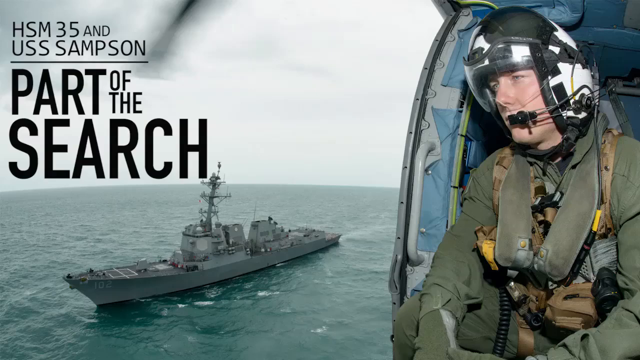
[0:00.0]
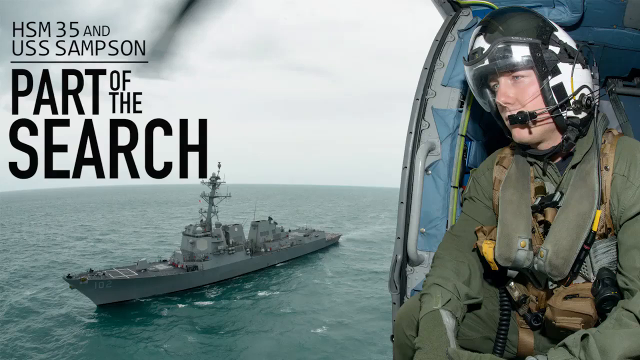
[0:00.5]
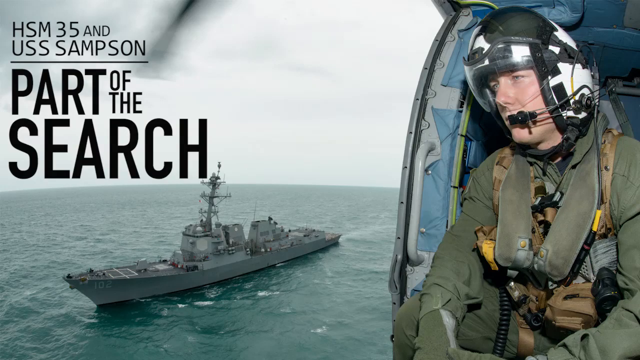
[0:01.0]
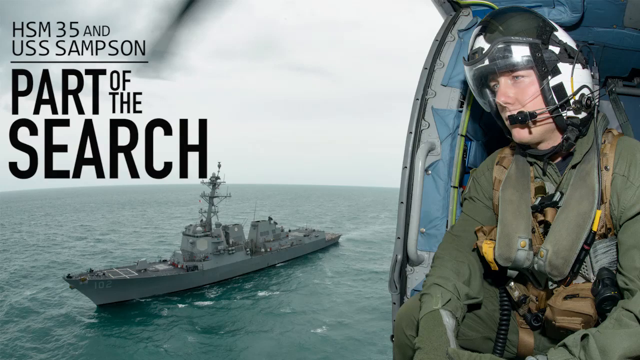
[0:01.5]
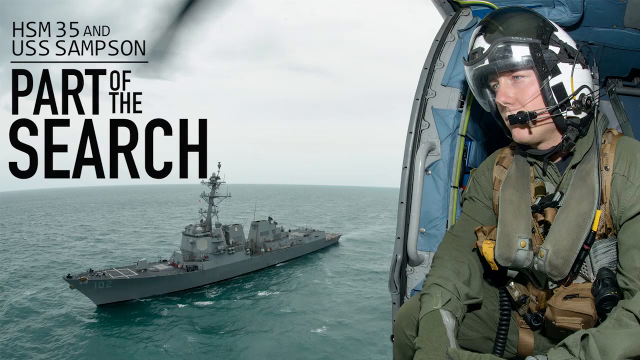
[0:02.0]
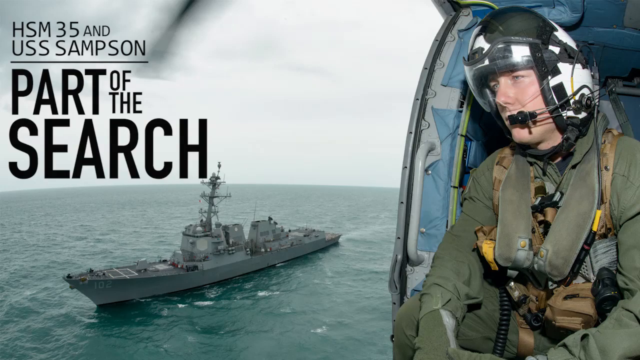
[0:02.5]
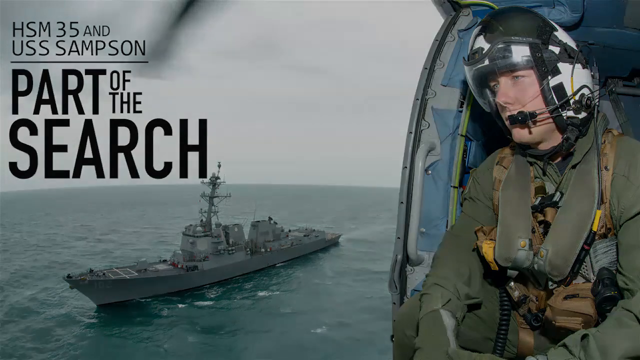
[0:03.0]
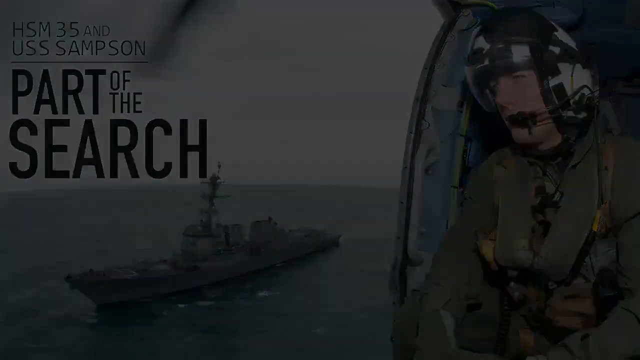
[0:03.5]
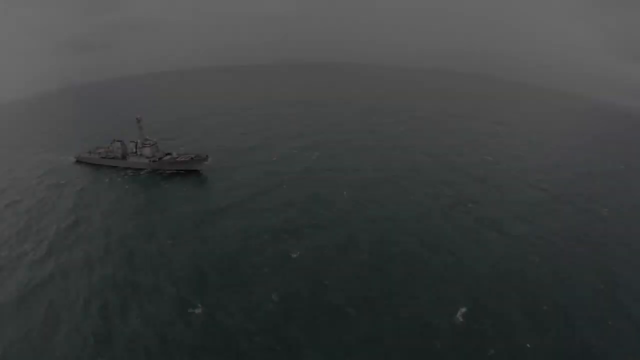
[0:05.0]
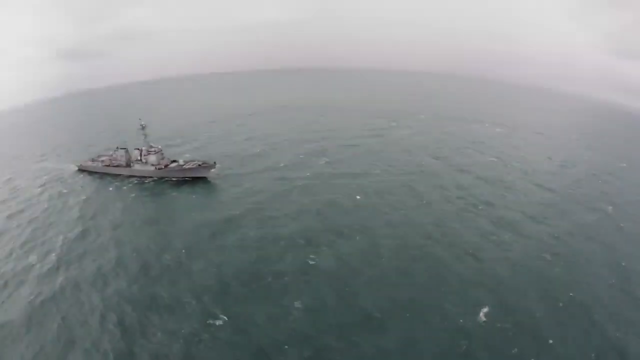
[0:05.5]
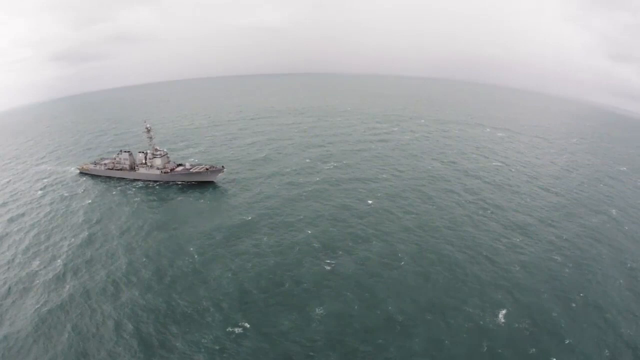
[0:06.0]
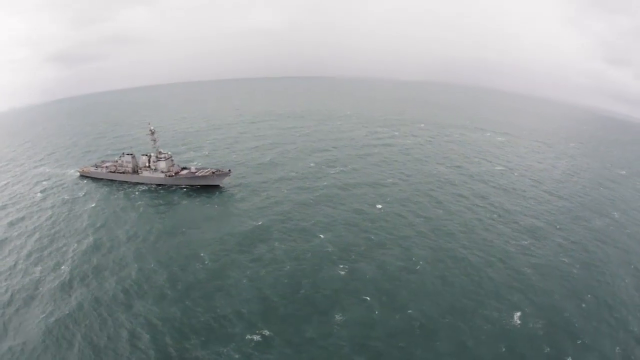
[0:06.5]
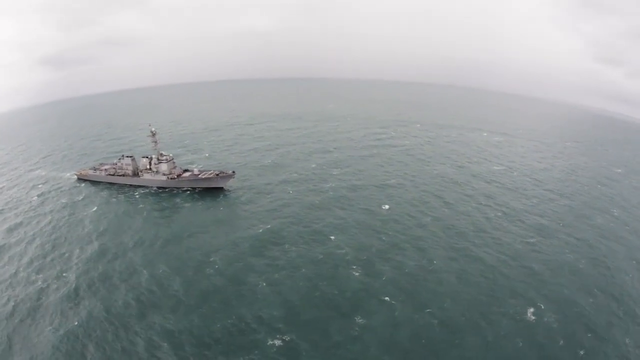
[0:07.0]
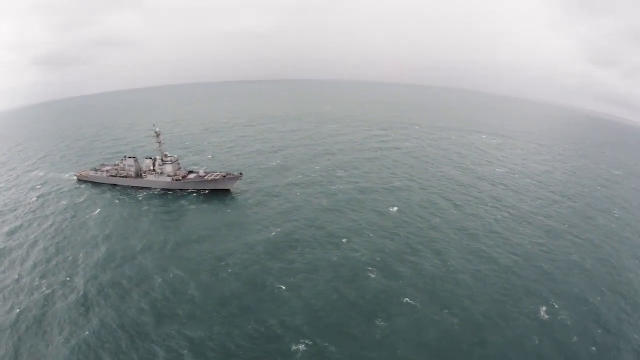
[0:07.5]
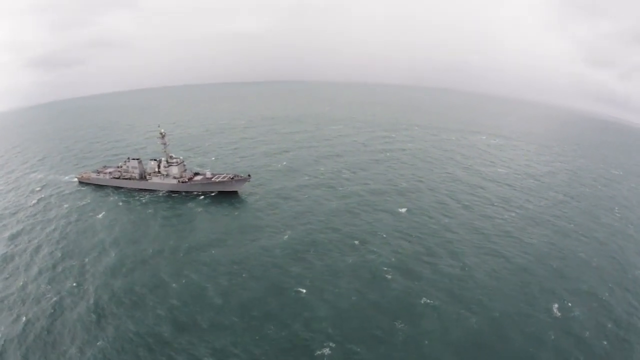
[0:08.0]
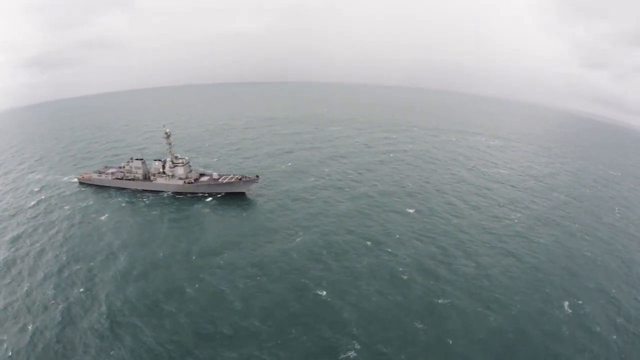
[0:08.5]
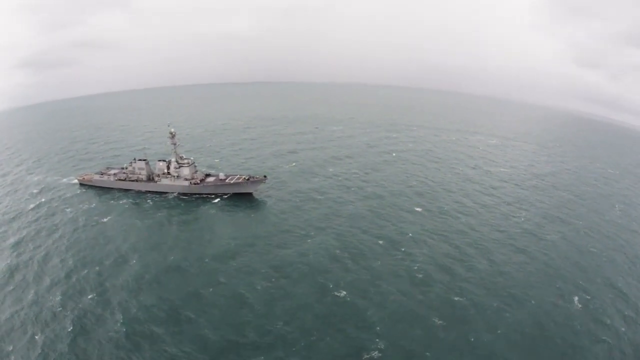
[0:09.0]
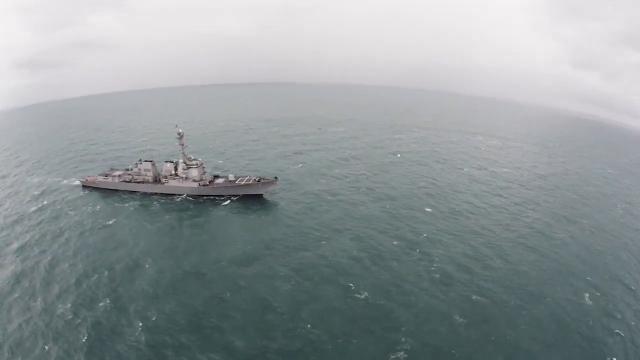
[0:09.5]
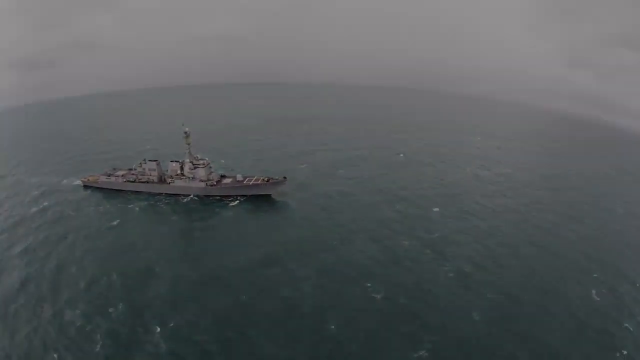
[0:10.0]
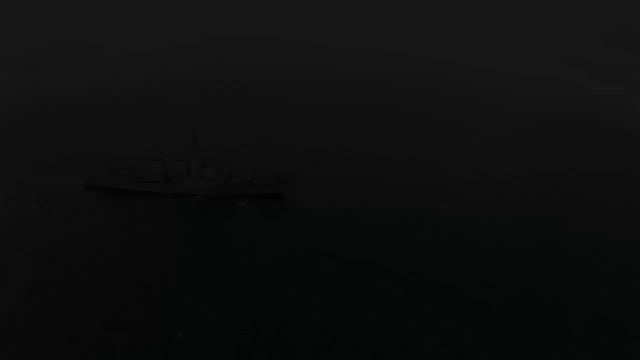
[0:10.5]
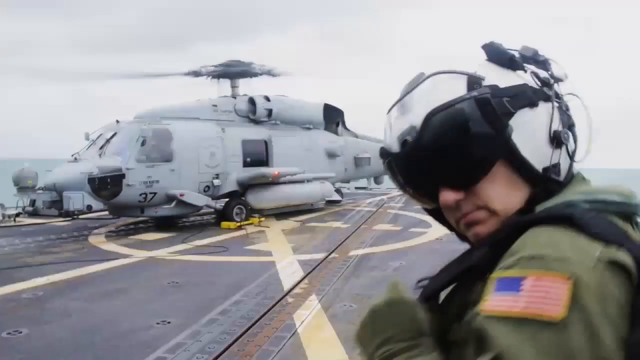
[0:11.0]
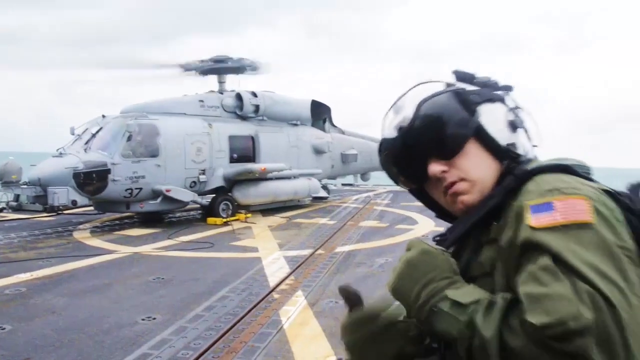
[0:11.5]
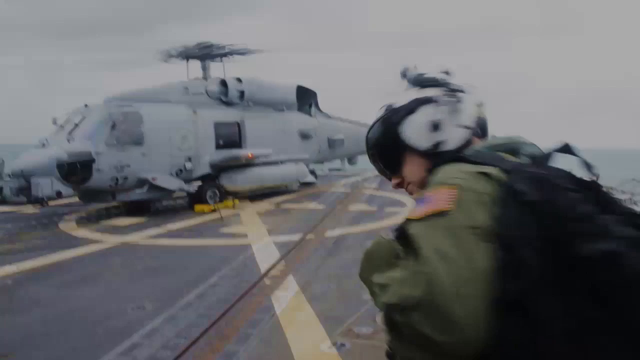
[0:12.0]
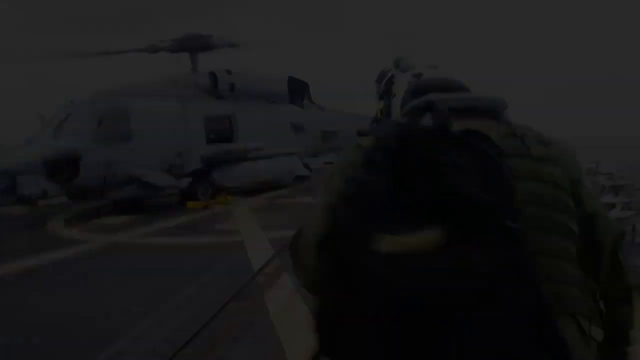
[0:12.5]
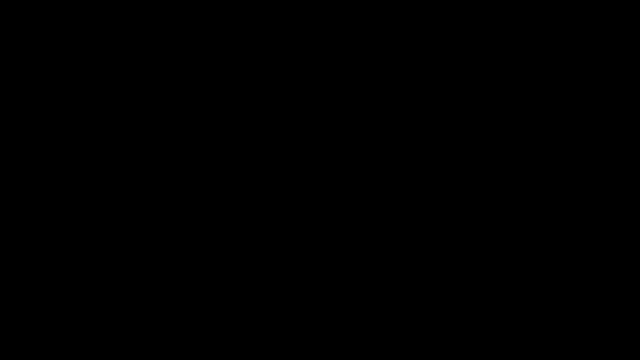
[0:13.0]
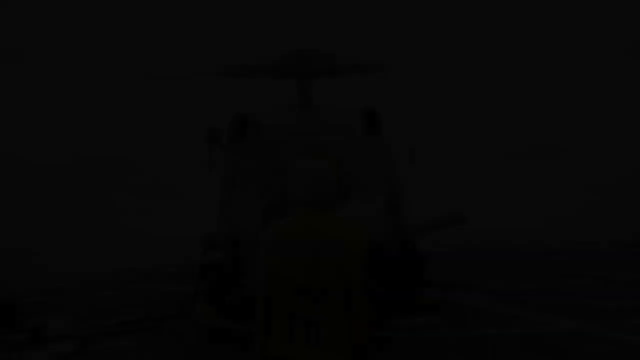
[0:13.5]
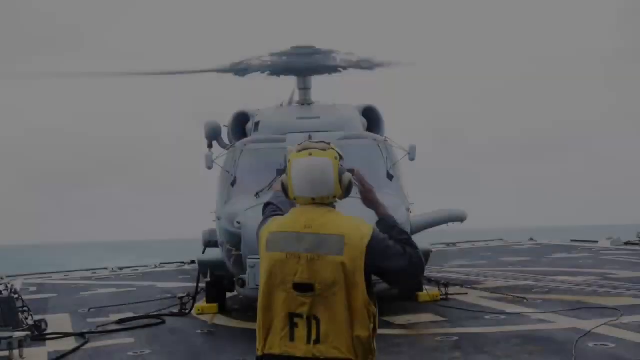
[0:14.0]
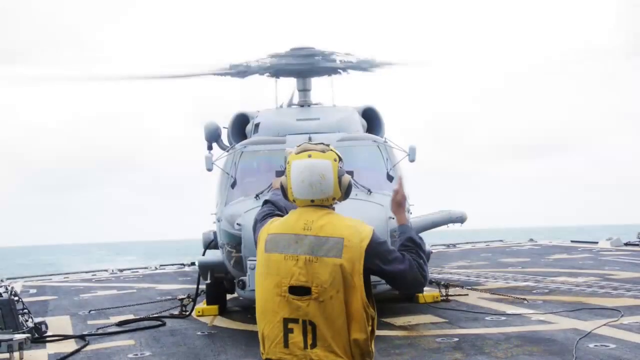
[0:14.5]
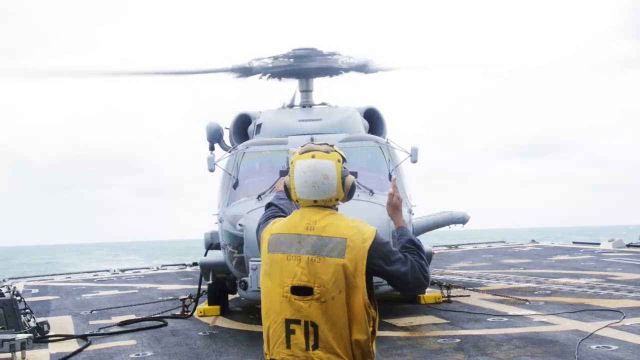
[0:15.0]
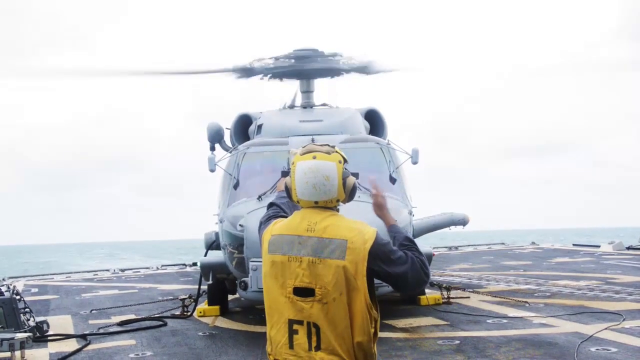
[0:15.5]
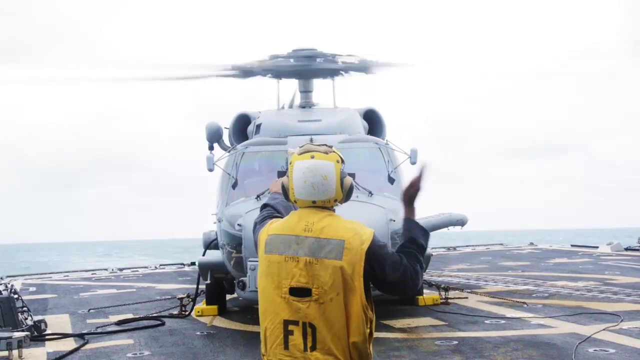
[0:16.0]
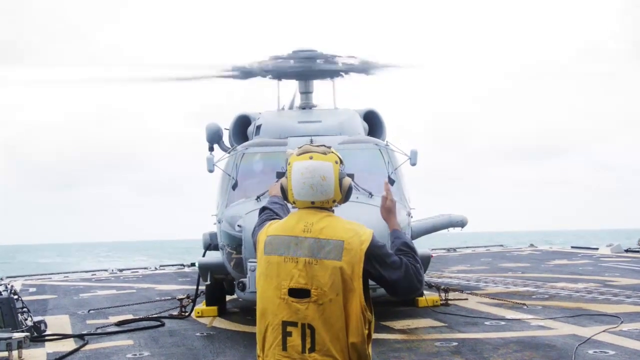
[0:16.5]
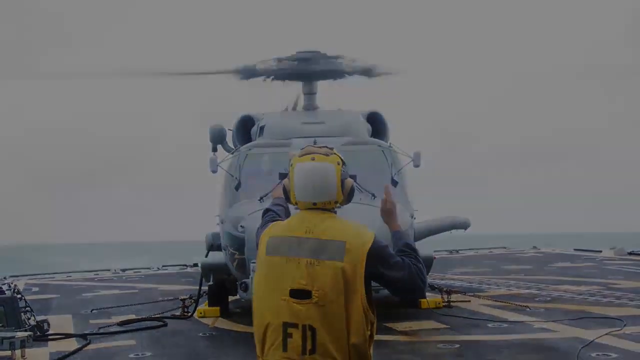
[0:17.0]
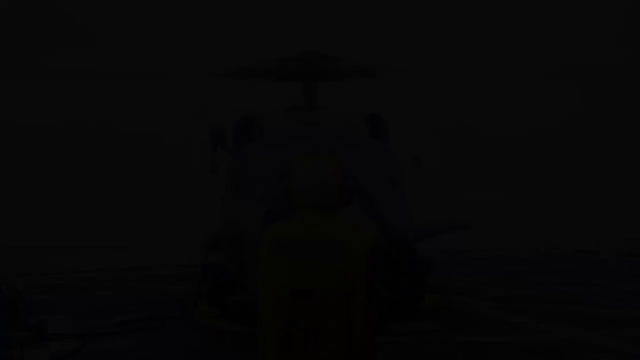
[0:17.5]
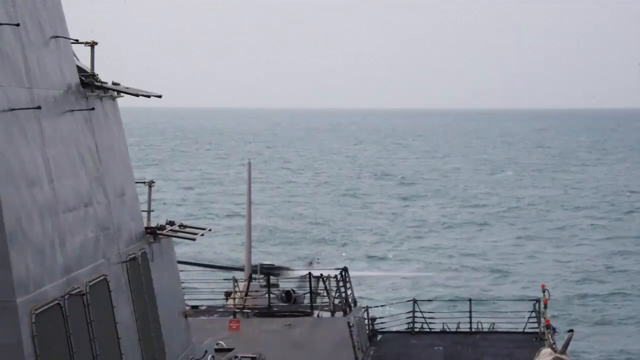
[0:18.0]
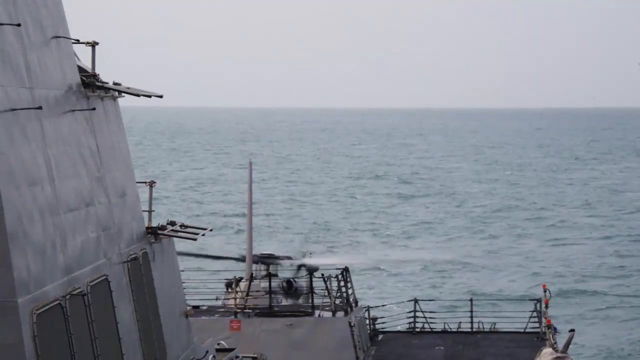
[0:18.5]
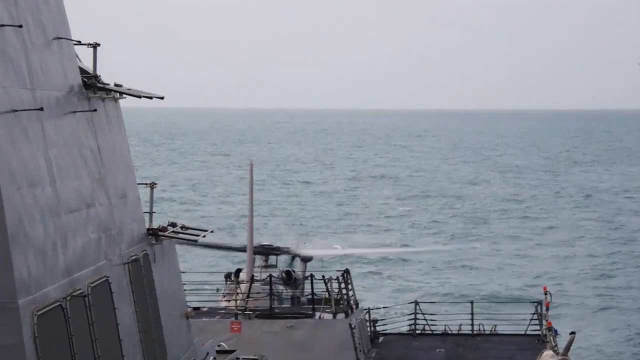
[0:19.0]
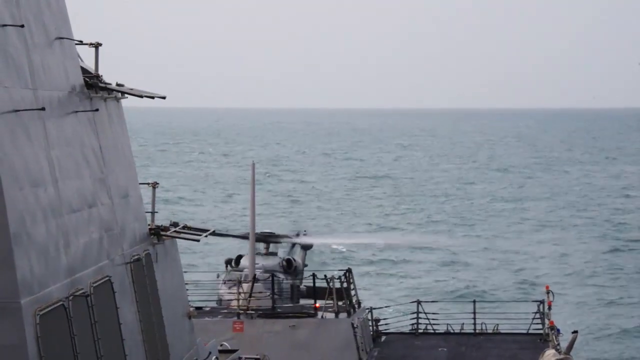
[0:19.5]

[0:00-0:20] A slide titled "HSM 35 and USS Samson part of the search" shows a battleship sailing on the ocean and an airman in a helicopter wearing a helmet and full attire. The image fades to black, then cuts to a fish-eye lens view of the horizon, so the horizon looks curved, with a battleship sailing across. It then cuts to an aircraft carrier with a military helicopter on it. An airman nods at the camera, gives a thumbs up, and heads to the helicopter. Another shot shows an airman guiding the helicopter's departure, followed by the helicopter hovering over the helipad.